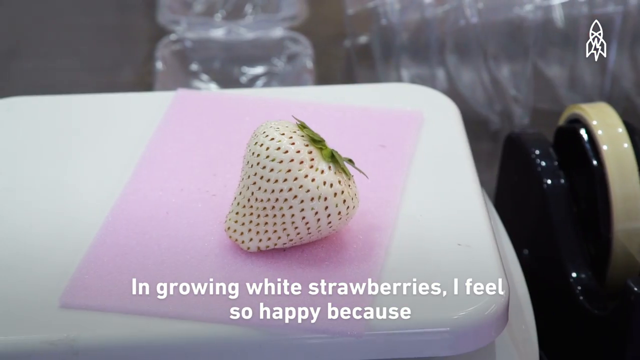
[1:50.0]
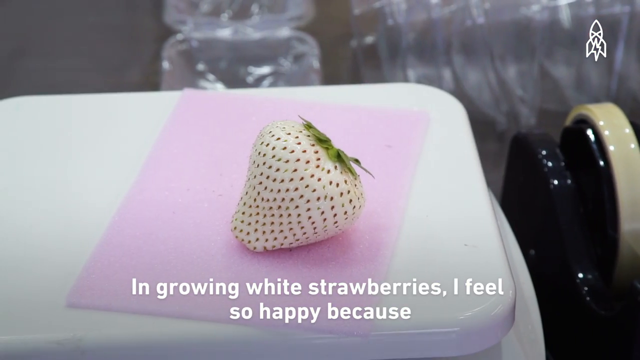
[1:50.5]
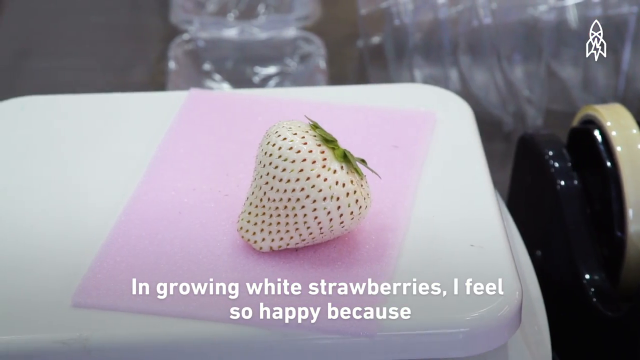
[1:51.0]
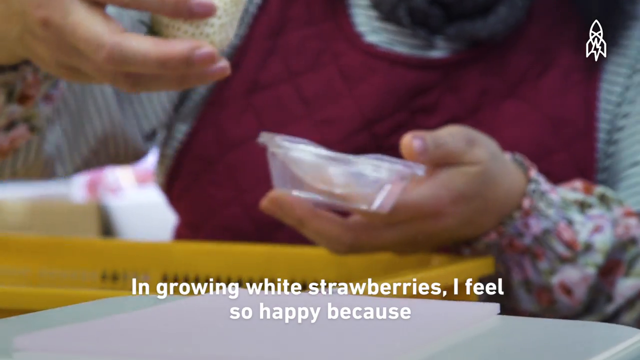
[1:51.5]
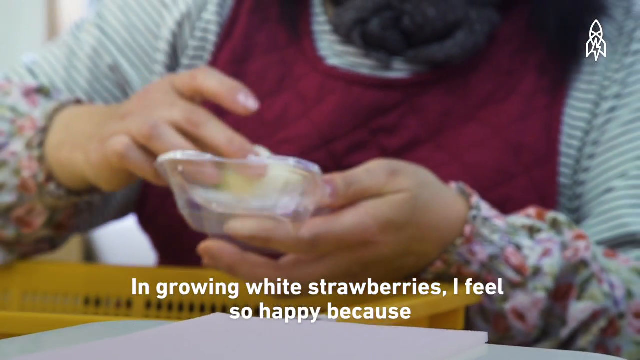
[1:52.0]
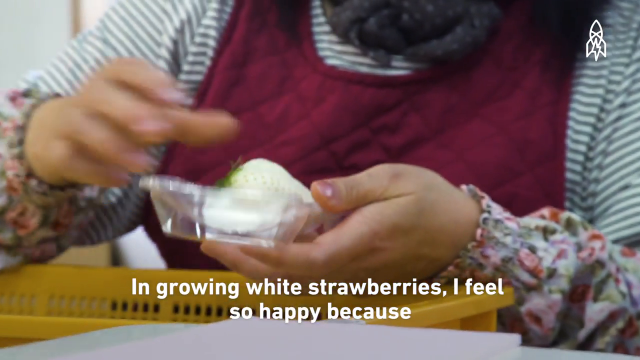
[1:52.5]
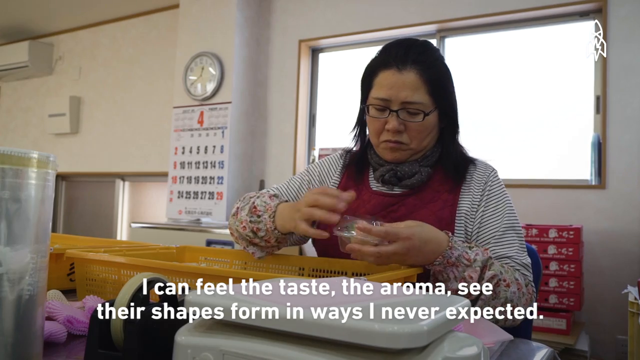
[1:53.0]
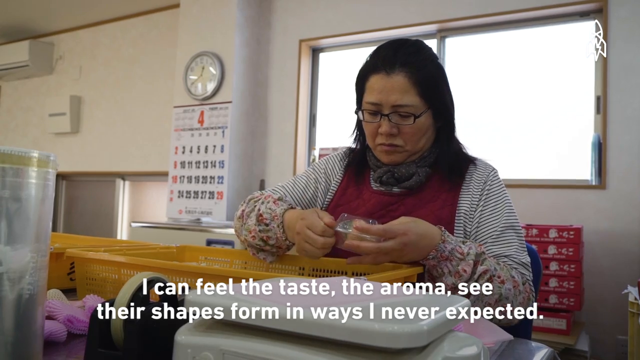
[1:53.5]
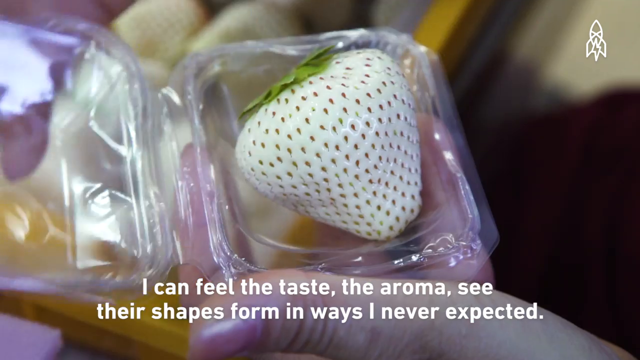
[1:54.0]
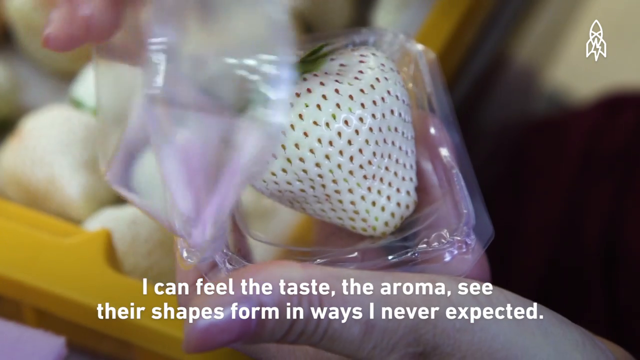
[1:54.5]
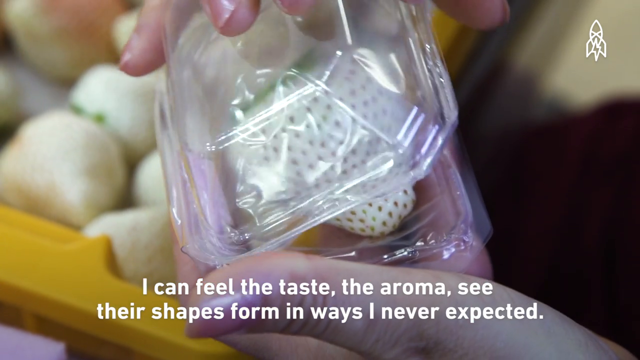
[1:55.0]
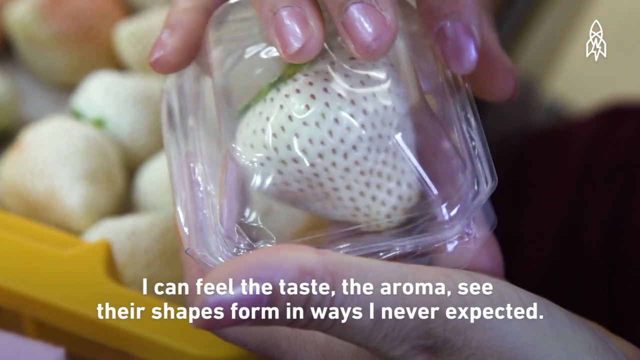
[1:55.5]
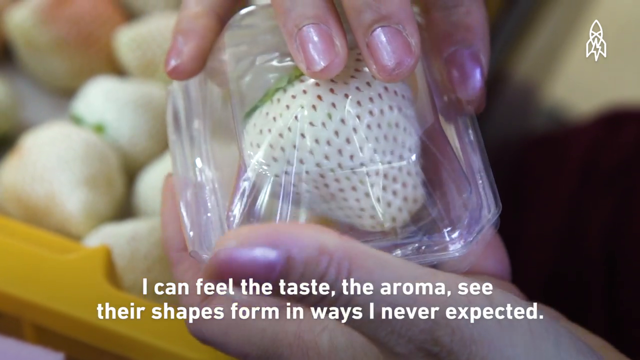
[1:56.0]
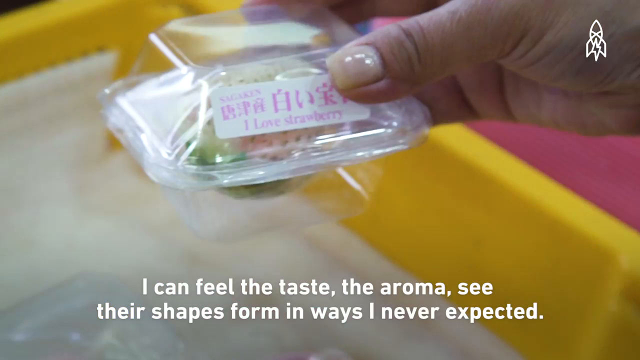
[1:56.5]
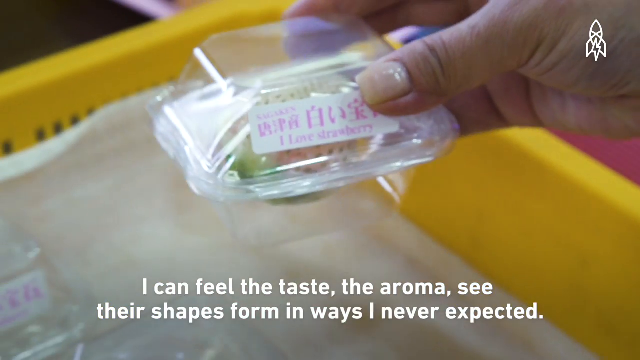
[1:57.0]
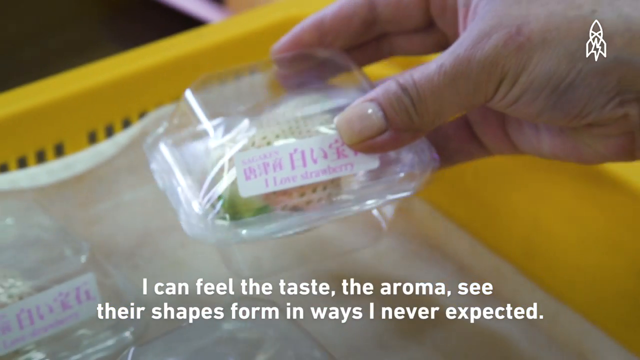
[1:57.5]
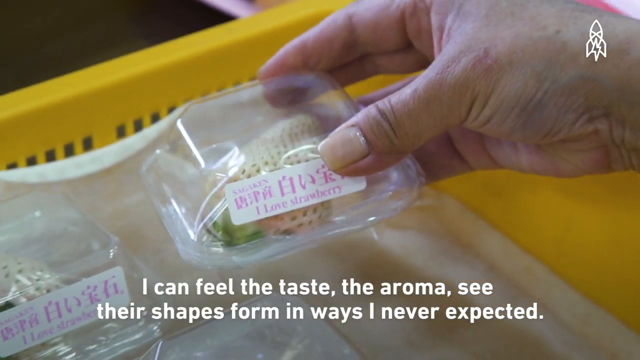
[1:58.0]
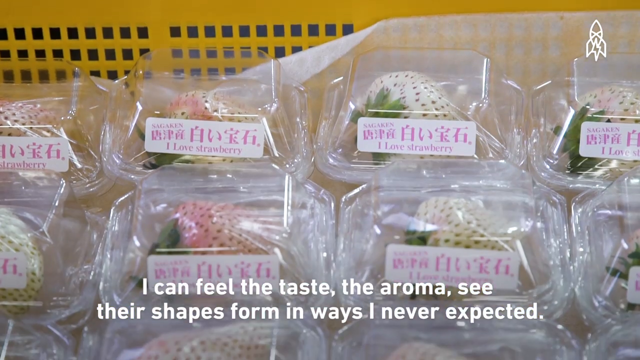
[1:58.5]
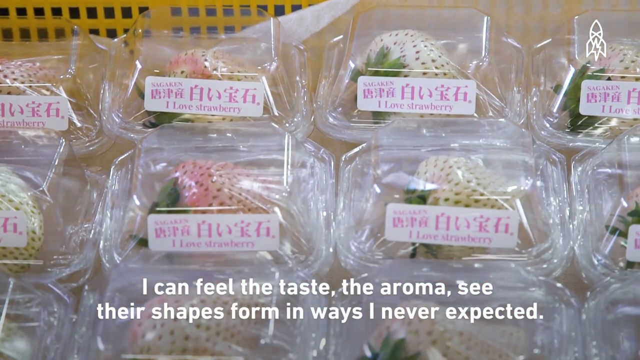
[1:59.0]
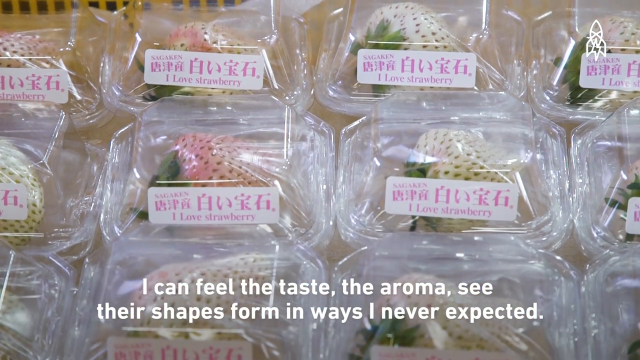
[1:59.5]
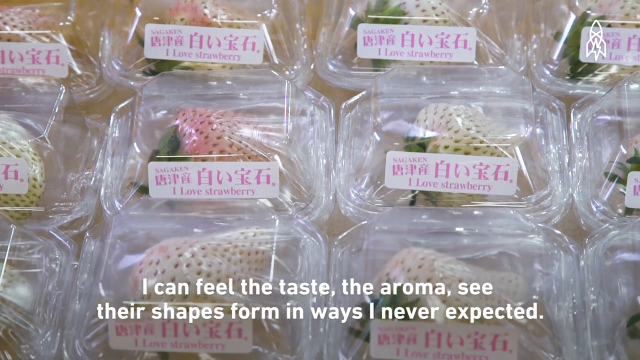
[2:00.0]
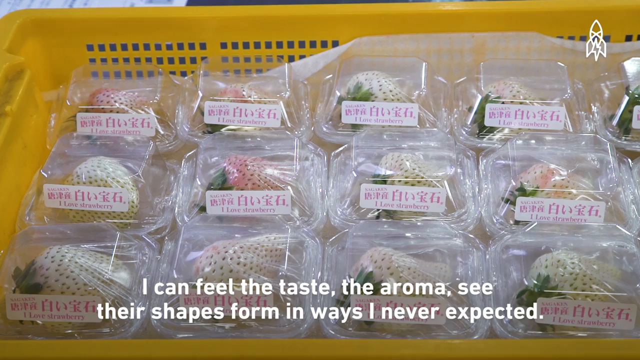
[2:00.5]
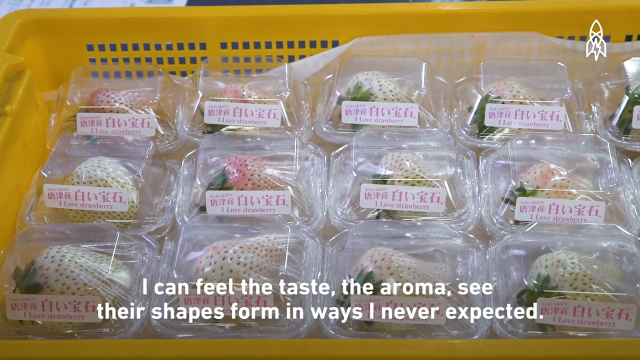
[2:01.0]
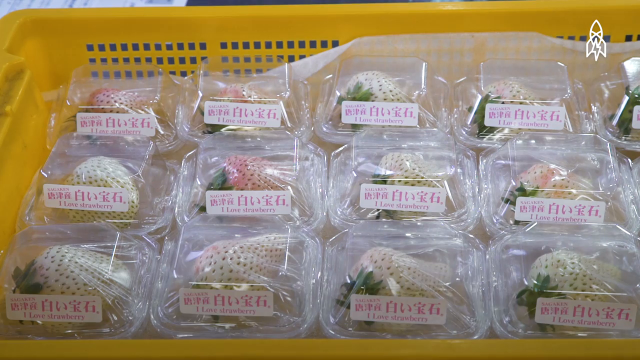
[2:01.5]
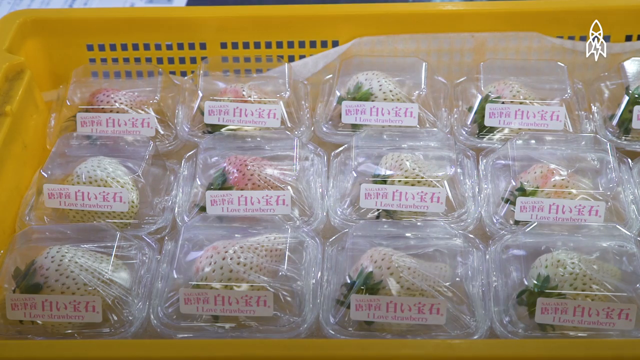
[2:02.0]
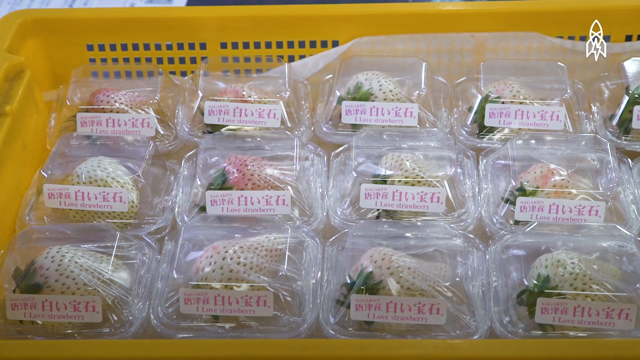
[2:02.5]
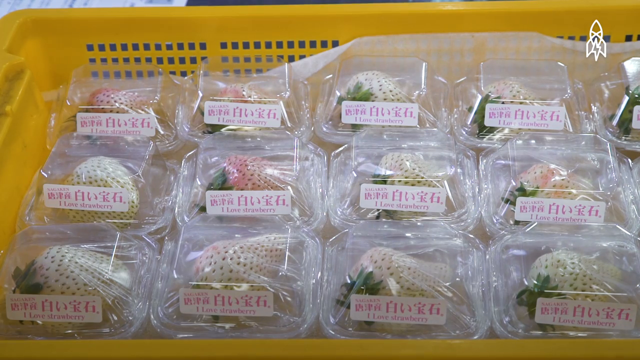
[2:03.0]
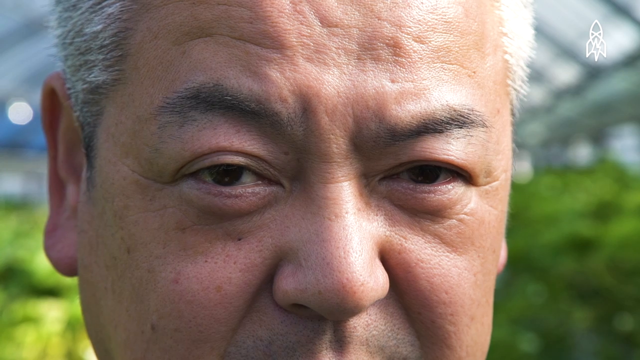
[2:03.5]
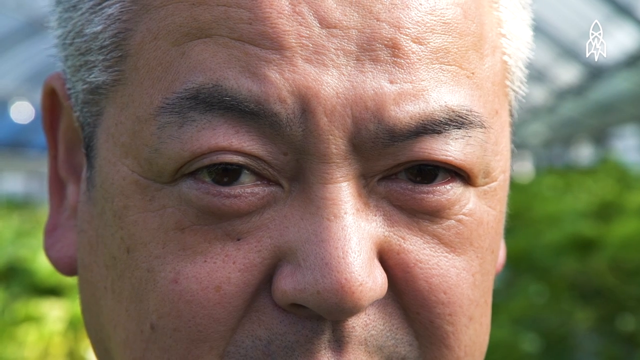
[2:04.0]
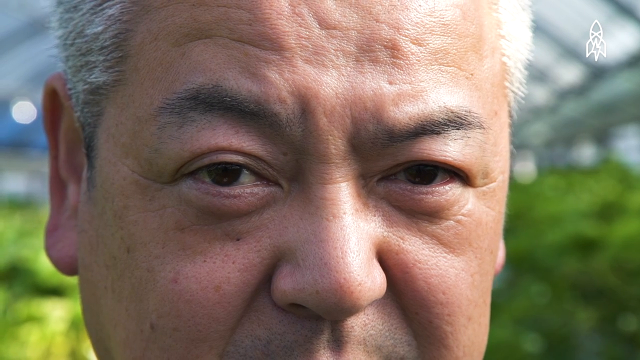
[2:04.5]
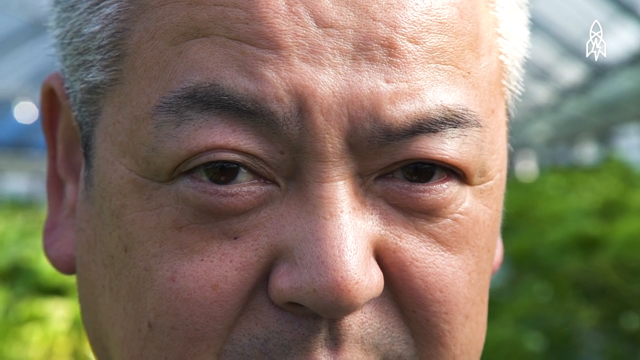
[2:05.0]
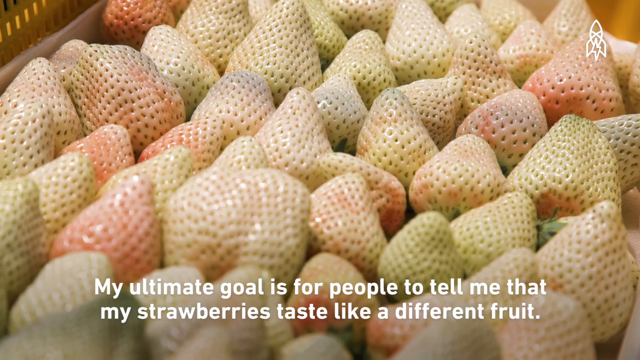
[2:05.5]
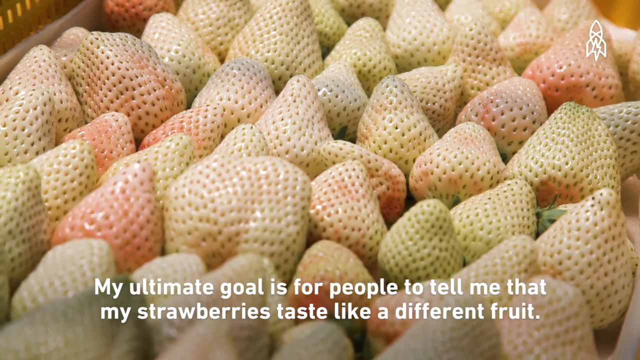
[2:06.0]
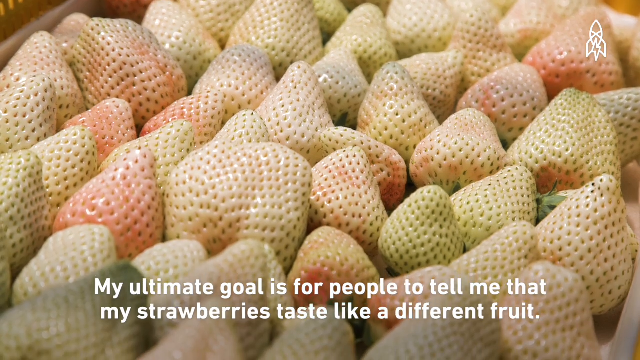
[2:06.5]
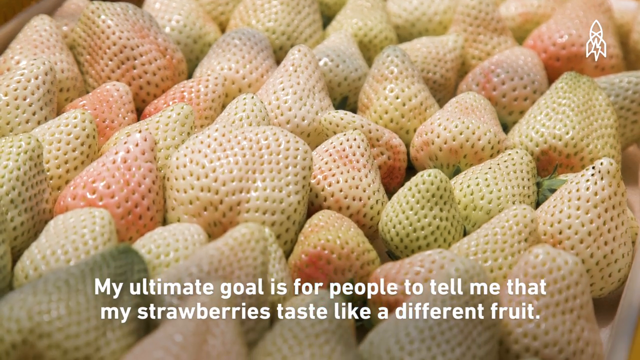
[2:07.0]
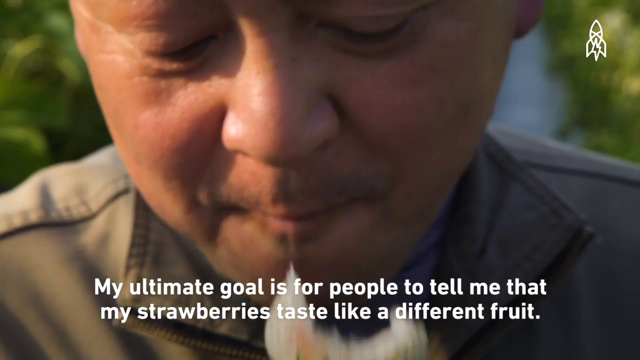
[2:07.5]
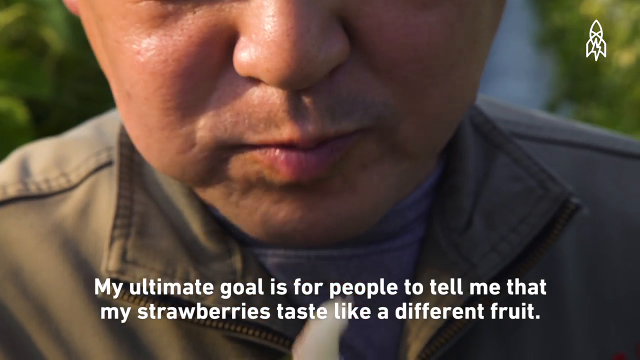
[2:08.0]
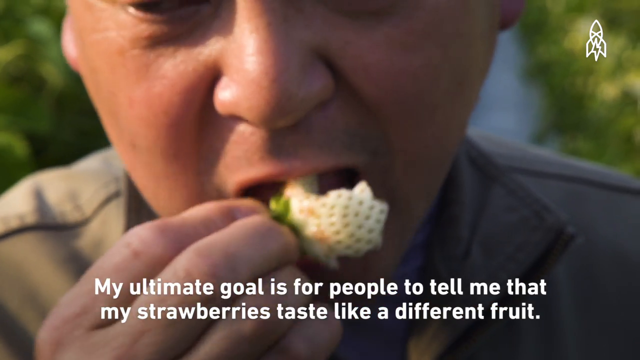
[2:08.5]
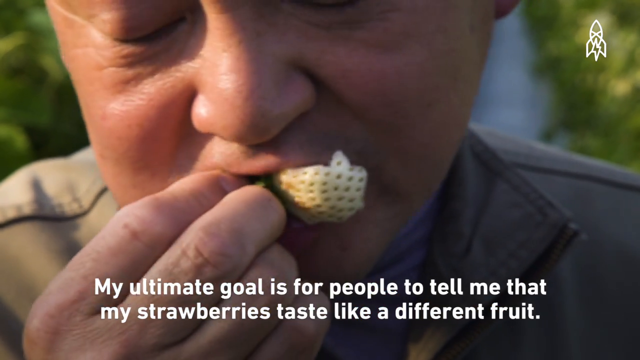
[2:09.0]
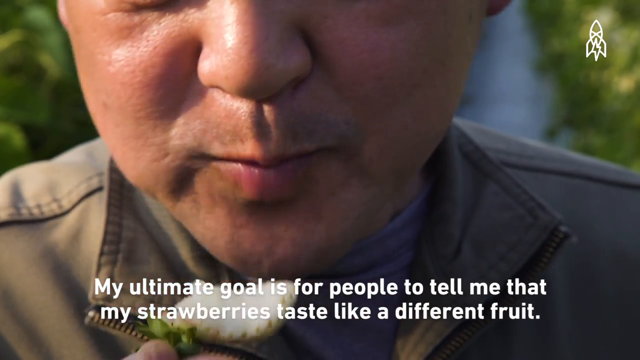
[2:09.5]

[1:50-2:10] The white jewel strawberries are beautifully packaged. An Asian woman collects the strawberries and places them into individual plastic cartons, one strawberry per carton, with about 12 cartons per strawberry bin. Mr. Tashima is also shown eating the white strawberries again.